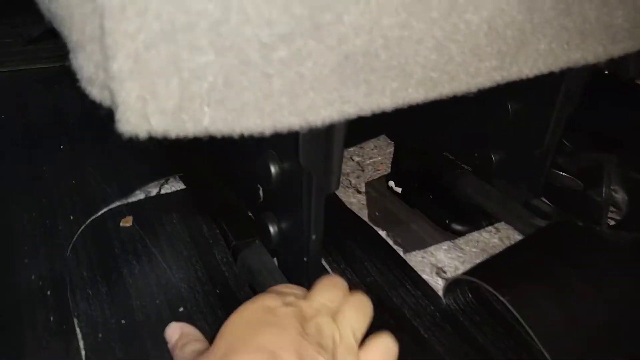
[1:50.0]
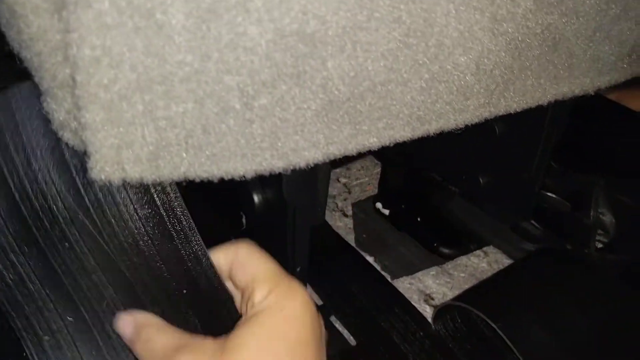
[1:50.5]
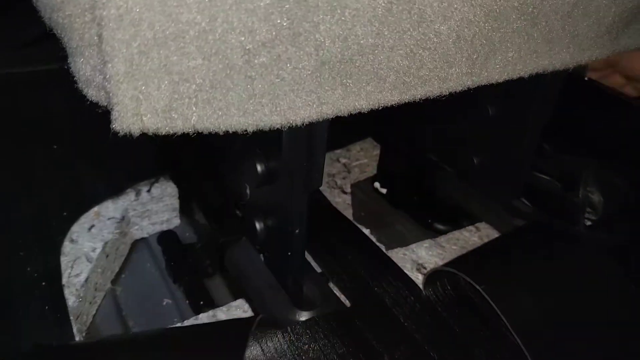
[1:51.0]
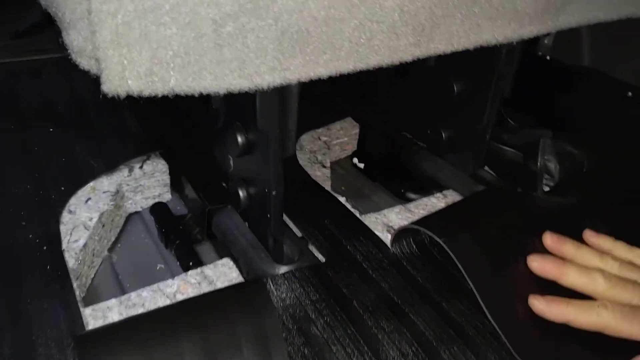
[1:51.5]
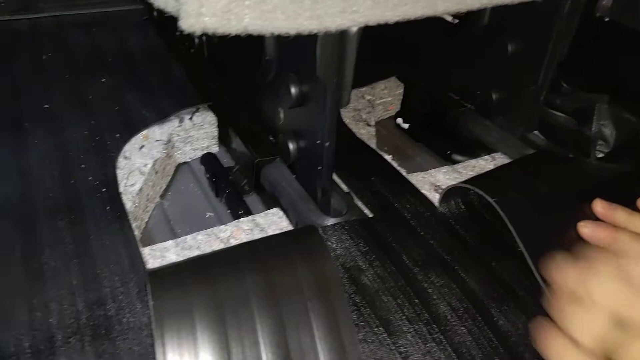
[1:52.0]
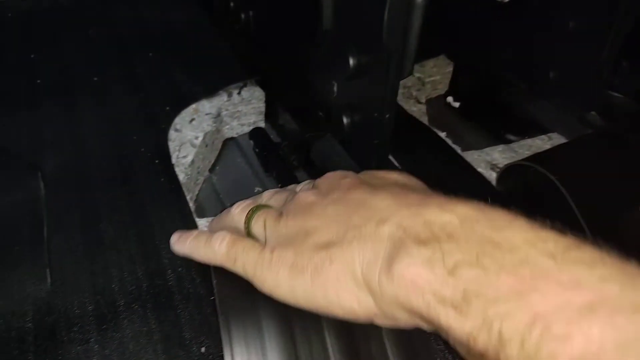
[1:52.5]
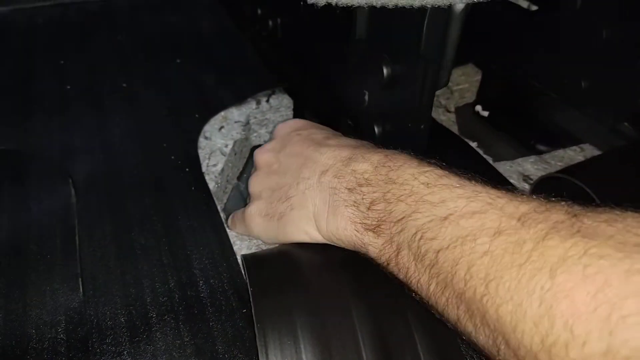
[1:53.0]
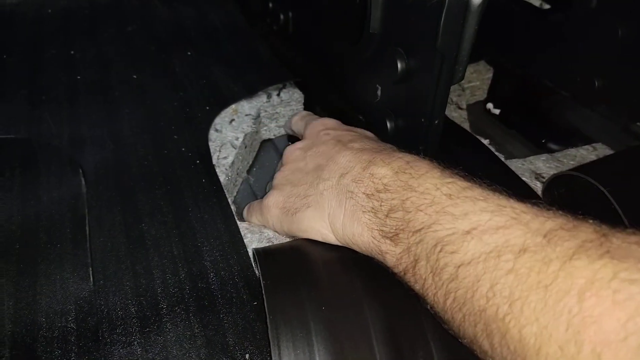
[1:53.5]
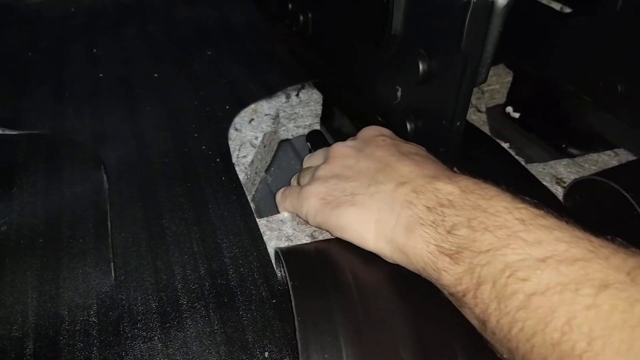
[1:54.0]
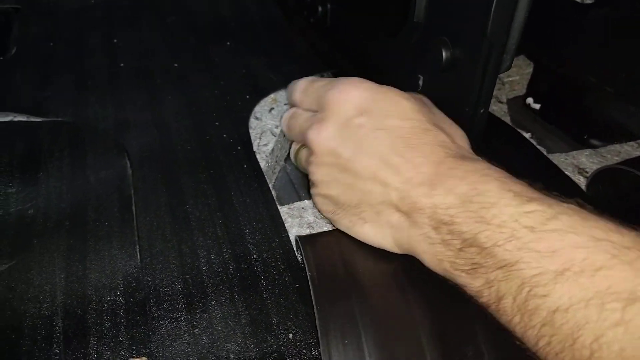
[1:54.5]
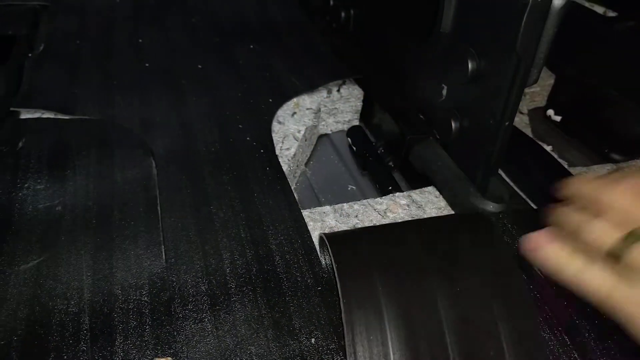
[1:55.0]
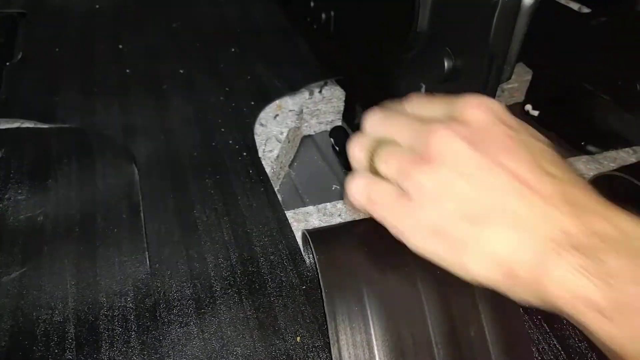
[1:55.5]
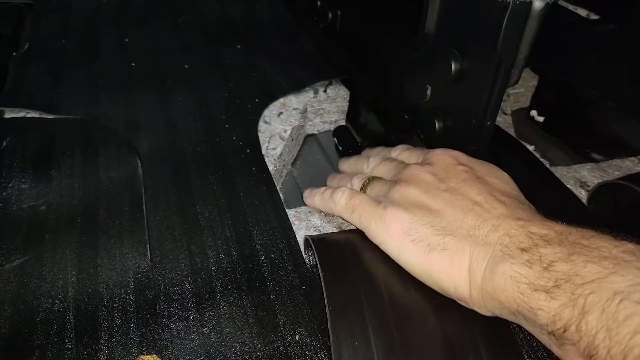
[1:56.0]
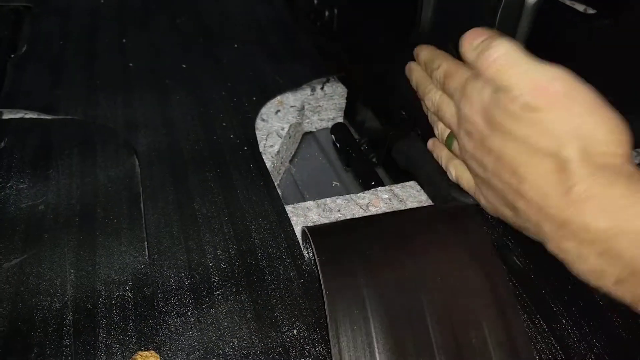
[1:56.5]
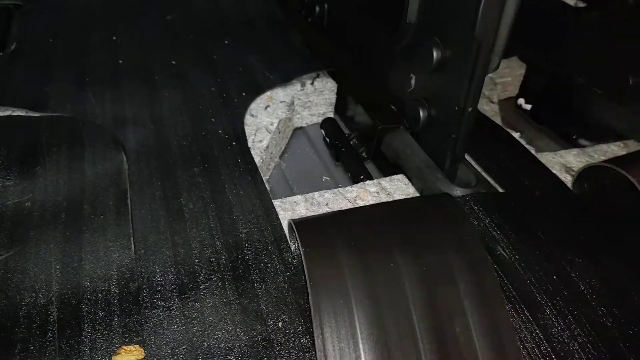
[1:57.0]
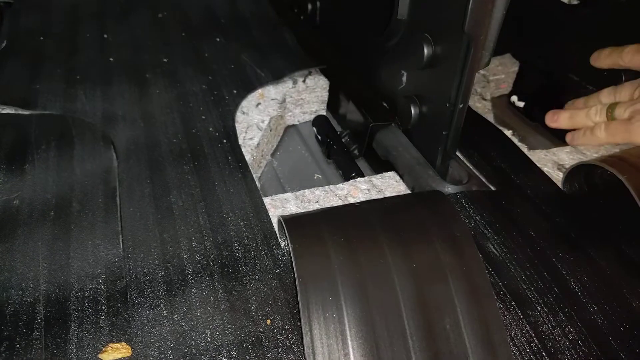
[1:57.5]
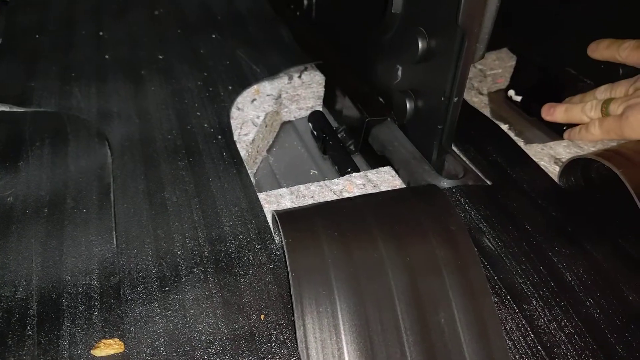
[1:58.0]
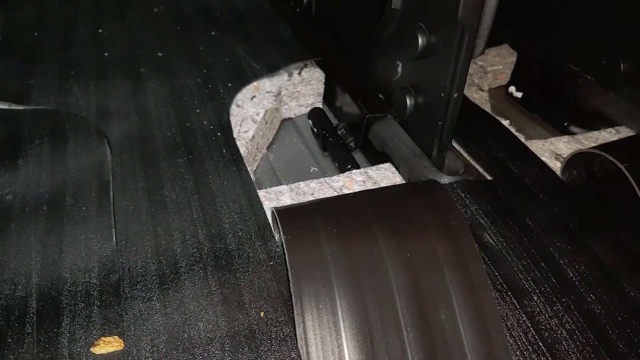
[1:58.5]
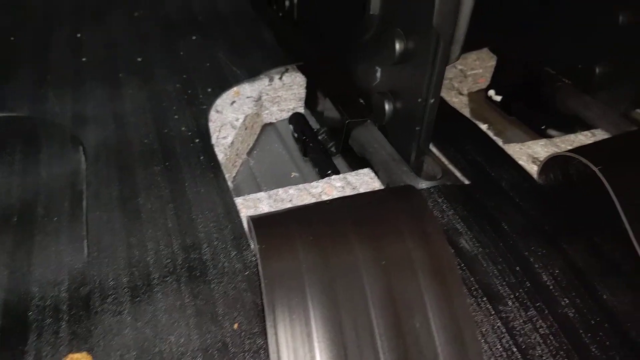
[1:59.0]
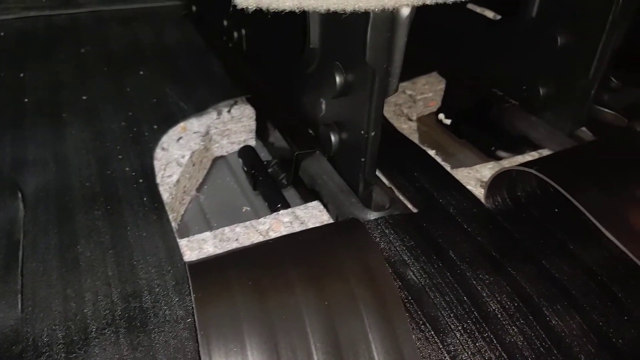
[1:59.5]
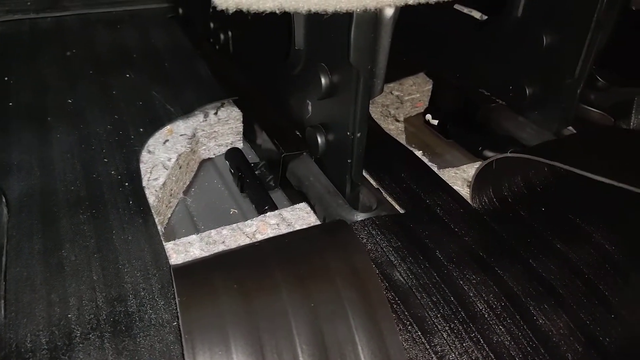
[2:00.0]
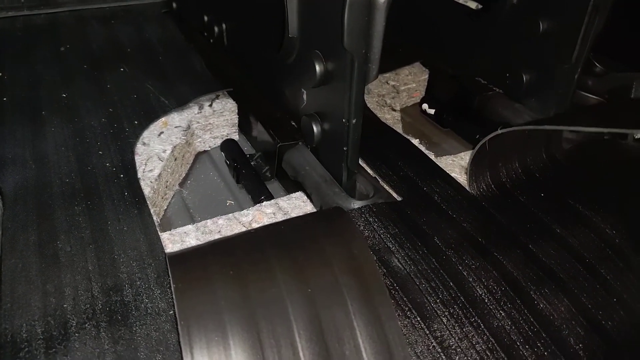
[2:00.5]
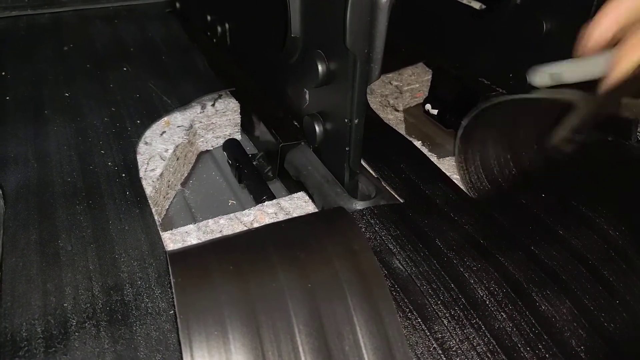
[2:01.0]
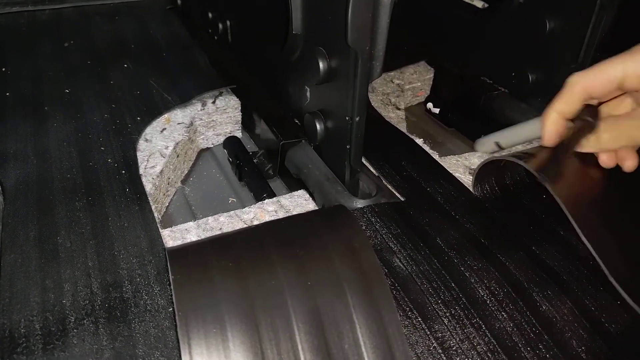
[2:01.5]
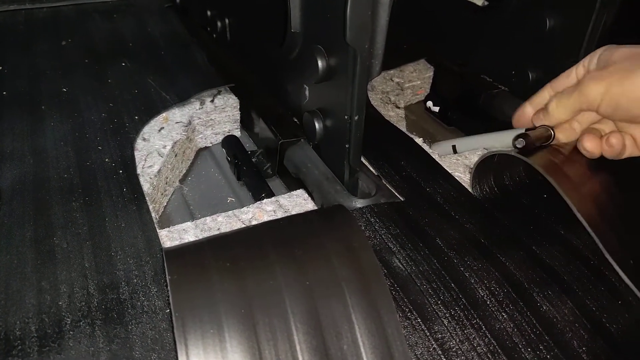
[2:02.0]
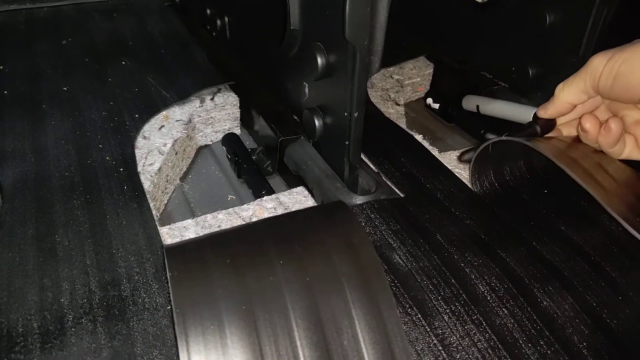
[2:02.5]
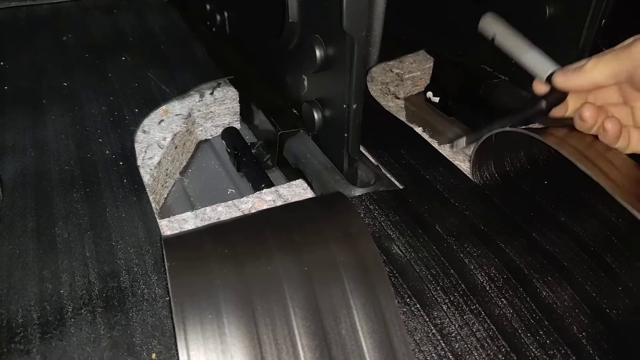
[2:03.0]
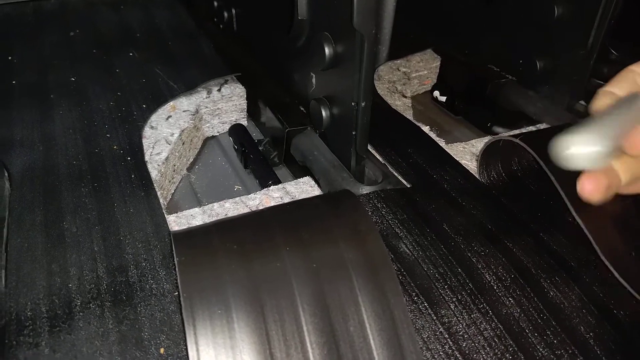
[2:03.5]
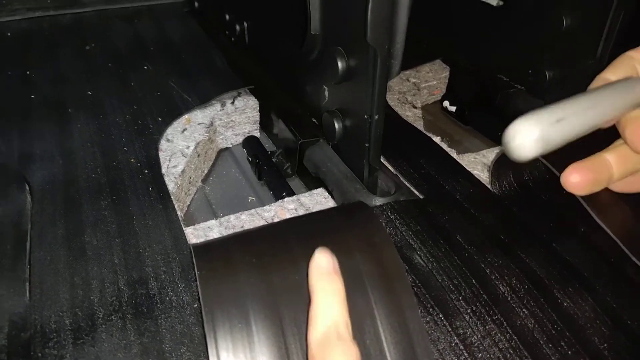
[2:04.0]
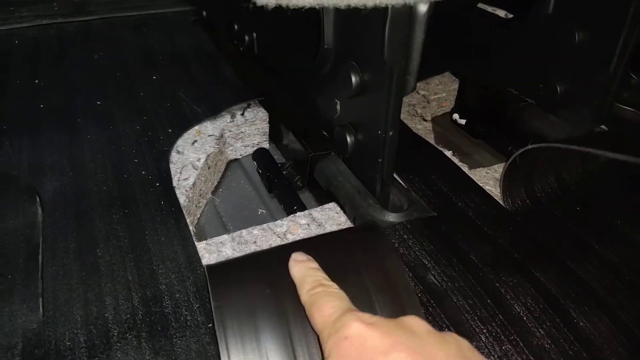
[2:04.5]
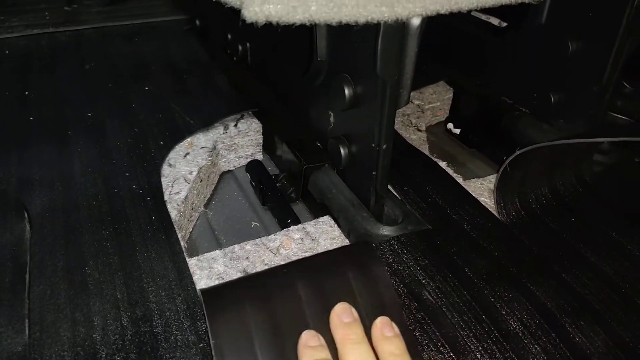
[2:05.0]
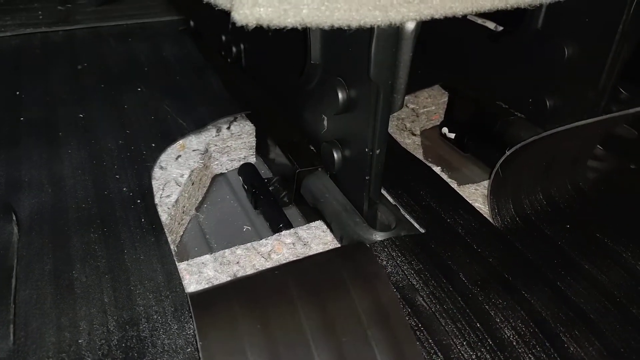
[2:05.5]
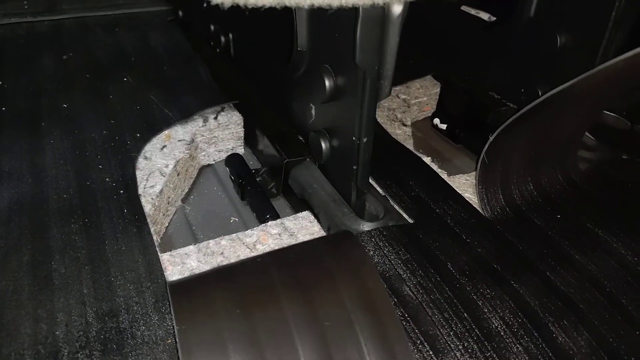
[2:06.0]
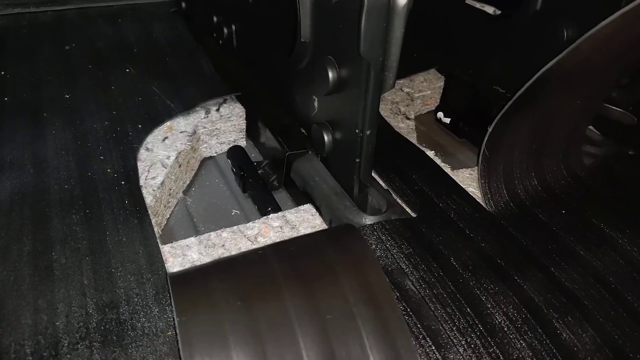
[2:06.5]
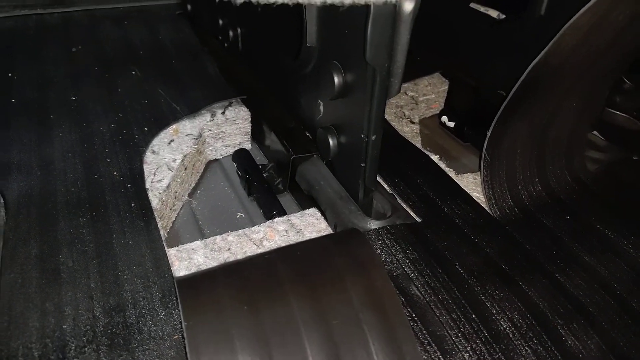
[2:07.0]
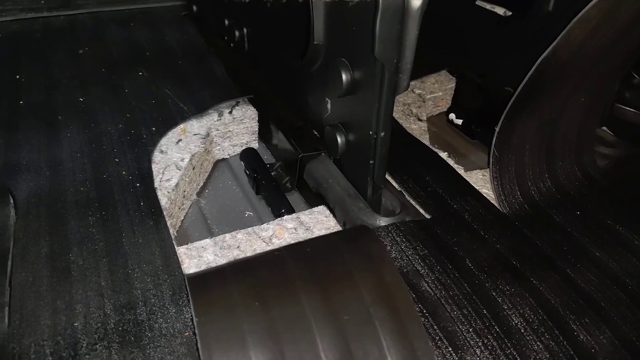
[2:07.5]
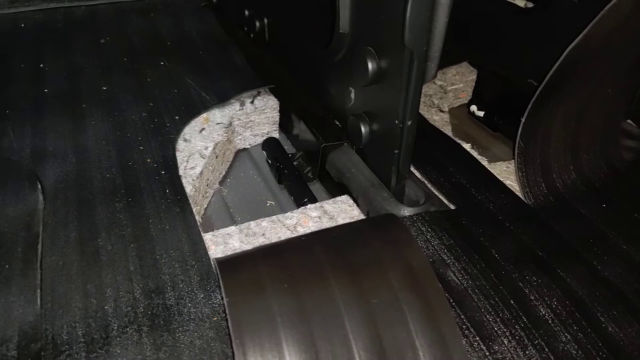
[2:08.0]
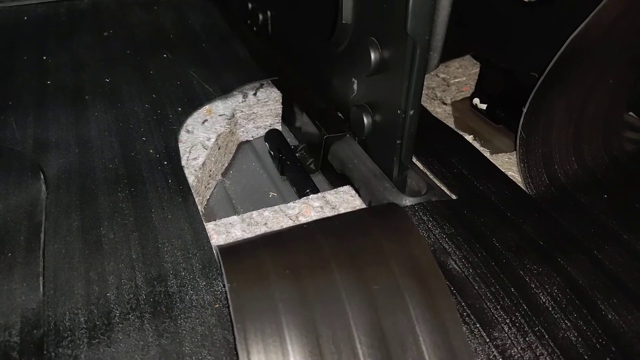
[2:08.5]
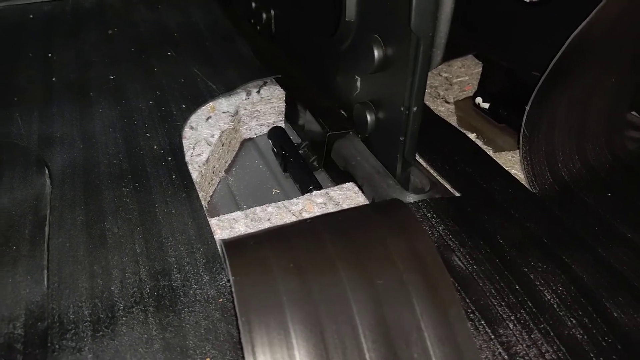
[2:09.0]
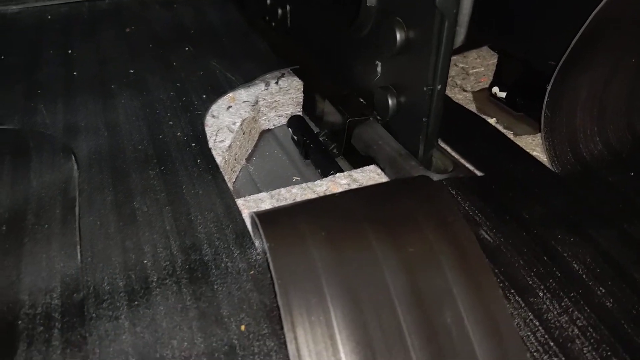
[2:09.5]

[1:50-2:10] The person uses their left hand to pull back the matting strip on the left-hand side of this seat and their right hand to hold down the matting, exposing the lever on the right-hand side of the seat support. With their left hand they demonstrate something about the left-hand lever, pat the seat support itself, and then demonstrate something about the right-hand lever. With their right hand they bring into shot one of the levers previously removed from the other seat and hold it over the right-hand lever of this seat, presumably to show their similarity. Both levers on either side of the left-hand seat support are in recesses cut into white polystyrene. The person has quite hairy arms and is most likely male.